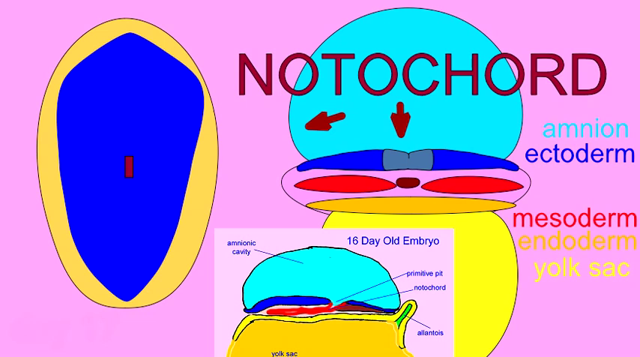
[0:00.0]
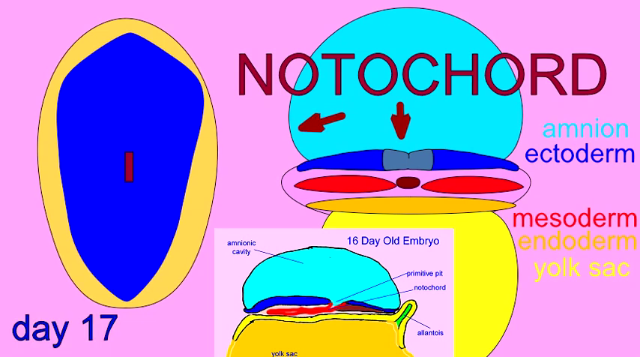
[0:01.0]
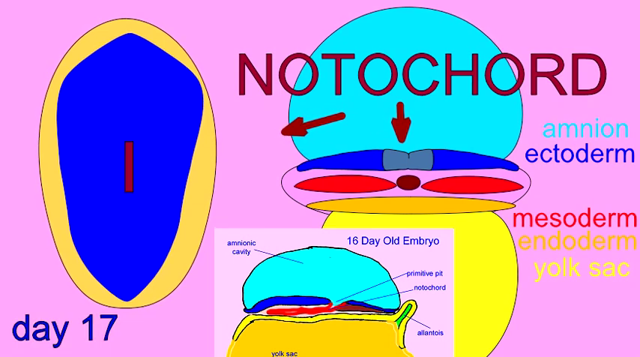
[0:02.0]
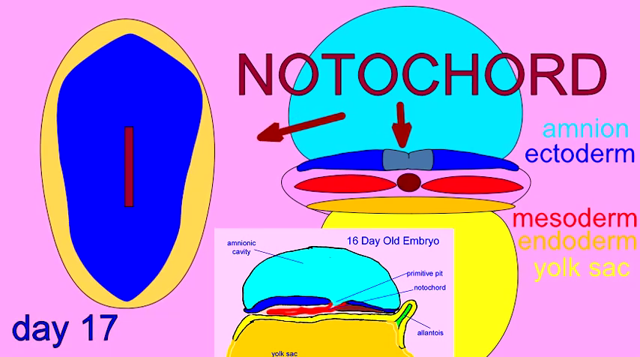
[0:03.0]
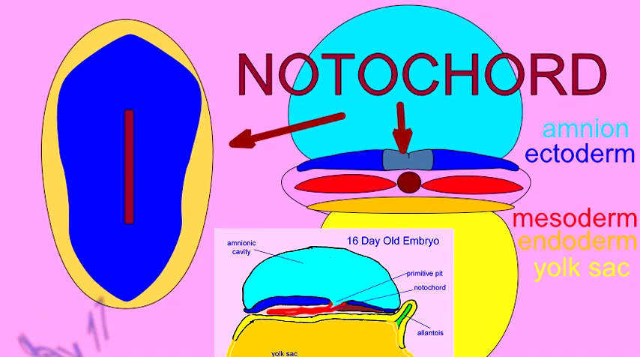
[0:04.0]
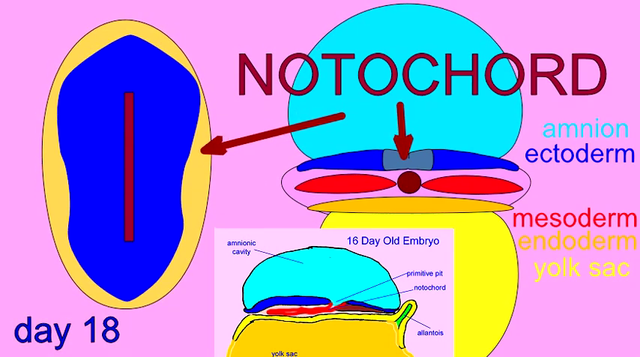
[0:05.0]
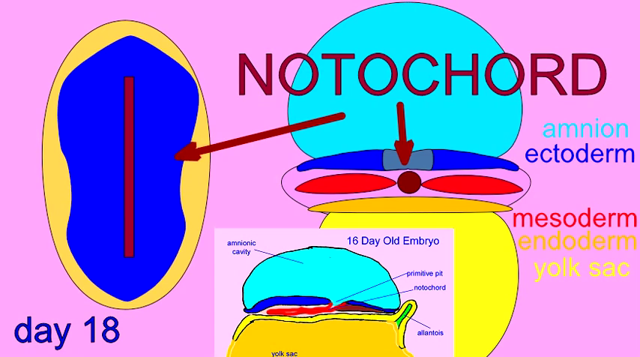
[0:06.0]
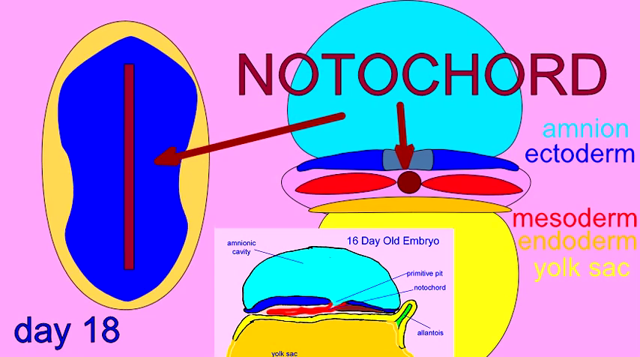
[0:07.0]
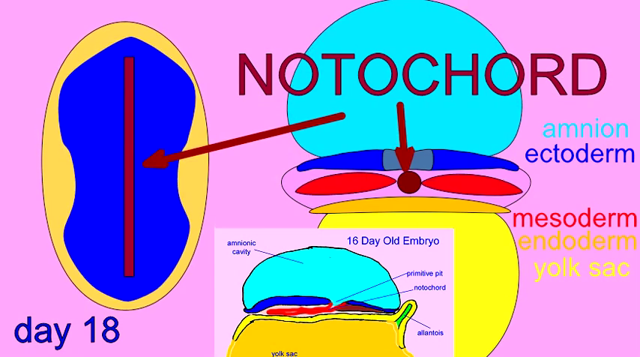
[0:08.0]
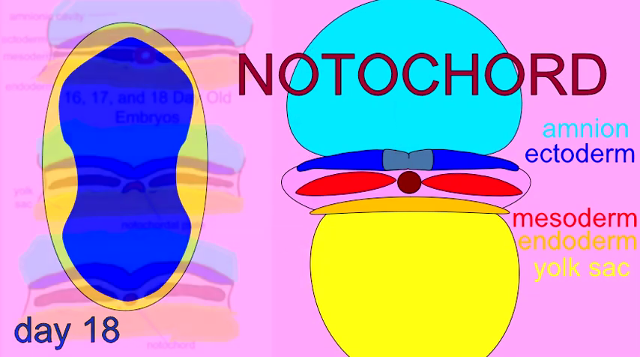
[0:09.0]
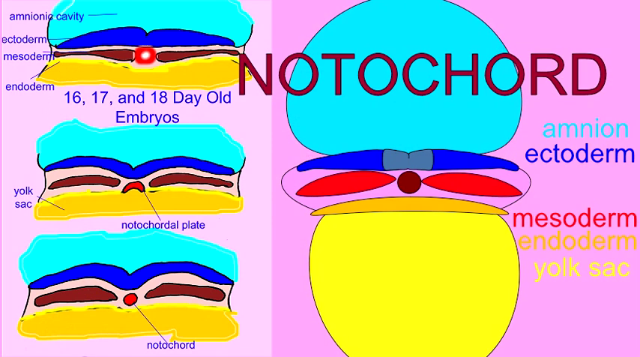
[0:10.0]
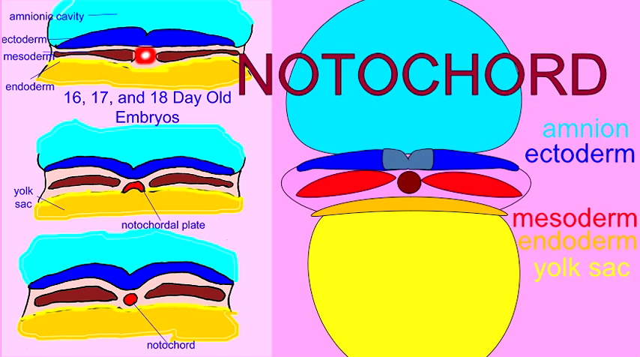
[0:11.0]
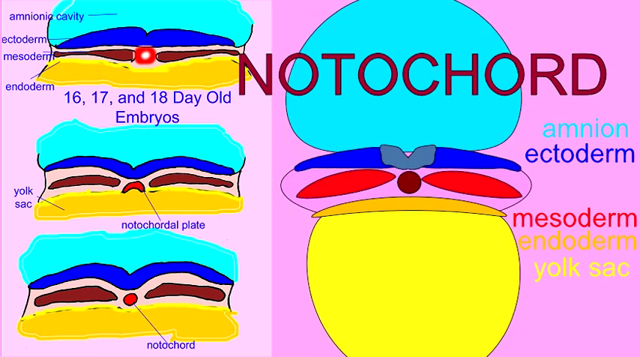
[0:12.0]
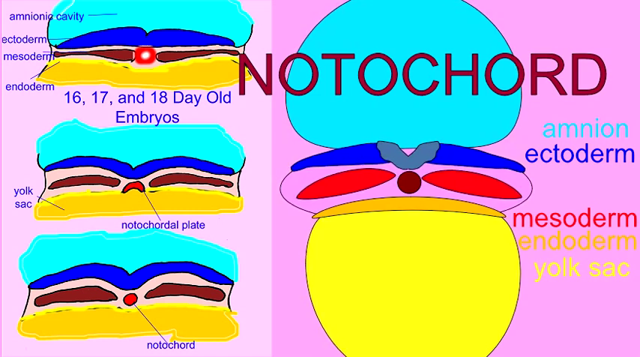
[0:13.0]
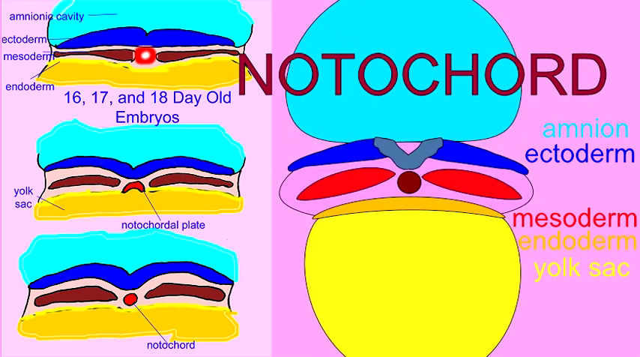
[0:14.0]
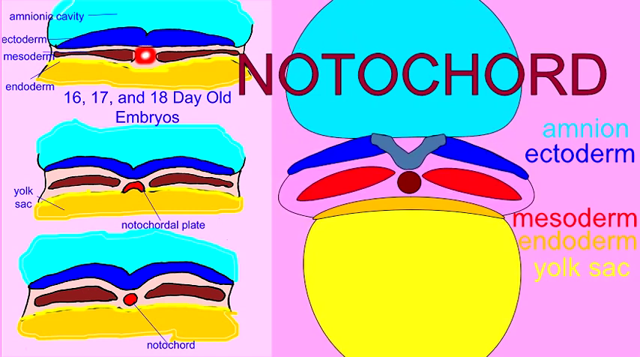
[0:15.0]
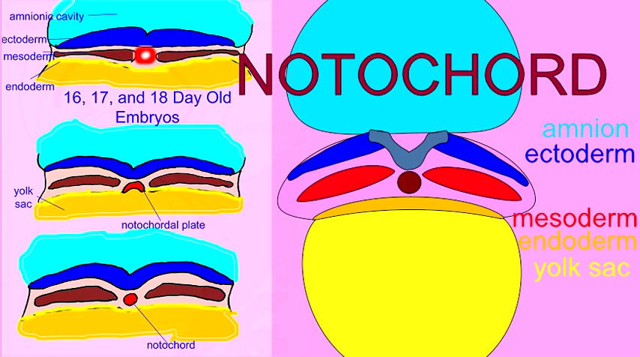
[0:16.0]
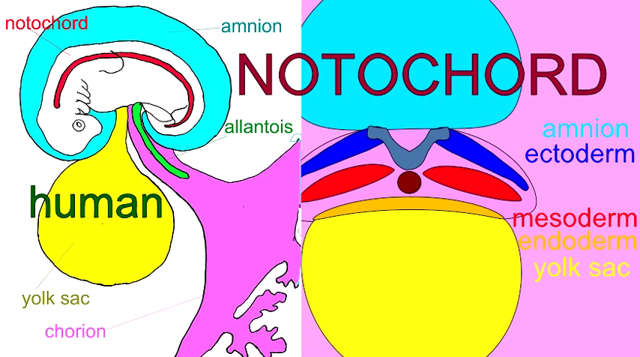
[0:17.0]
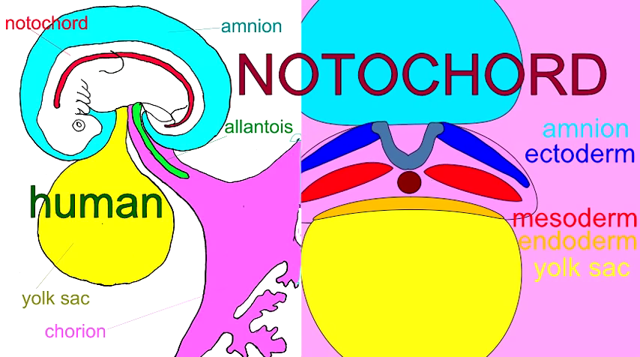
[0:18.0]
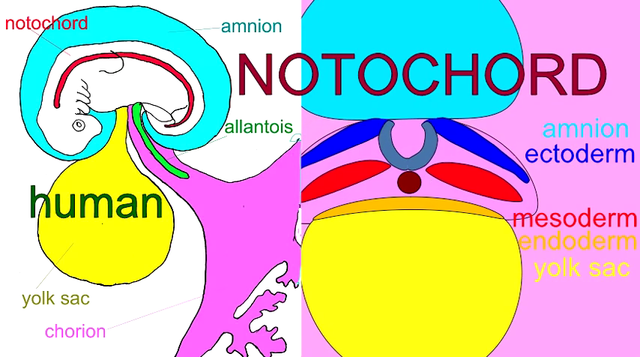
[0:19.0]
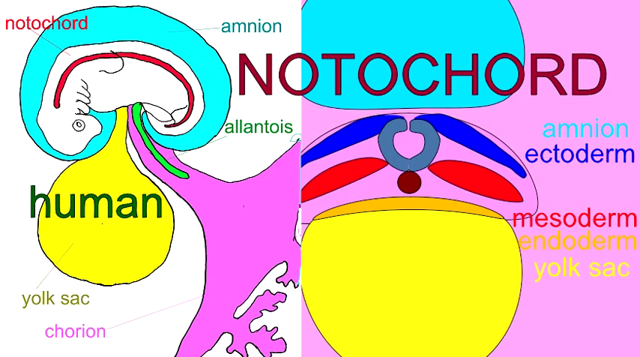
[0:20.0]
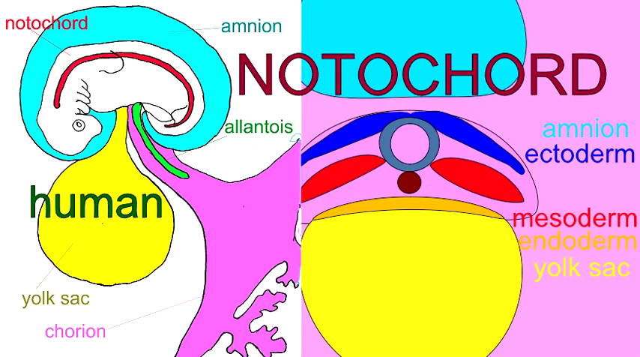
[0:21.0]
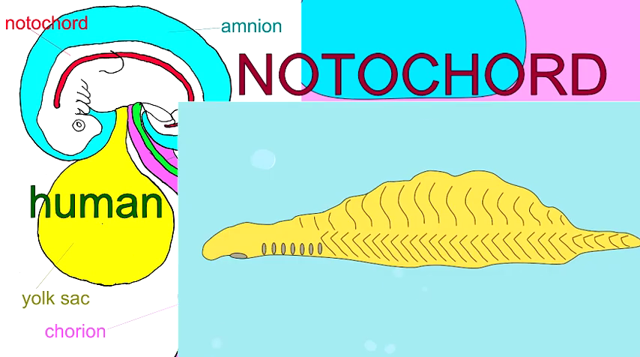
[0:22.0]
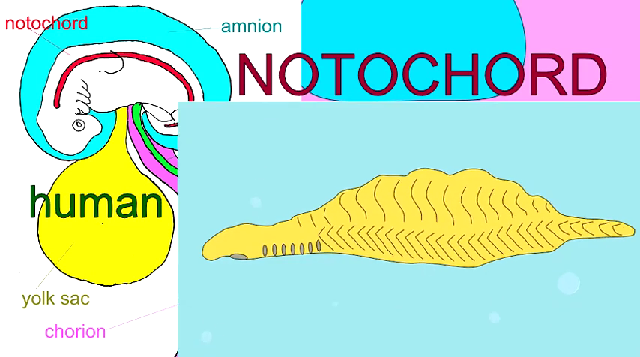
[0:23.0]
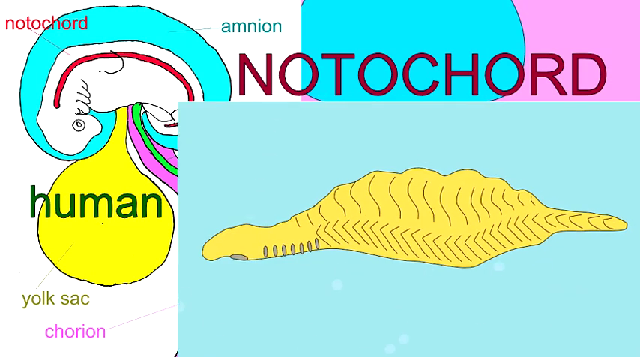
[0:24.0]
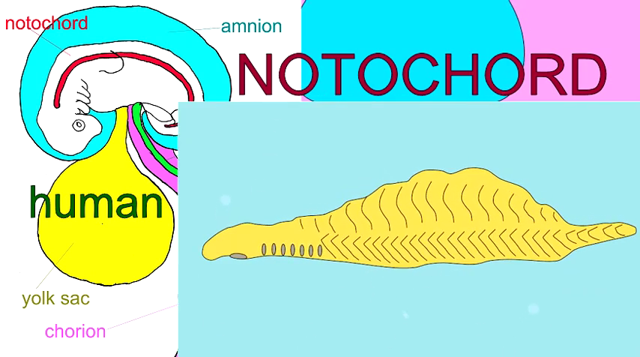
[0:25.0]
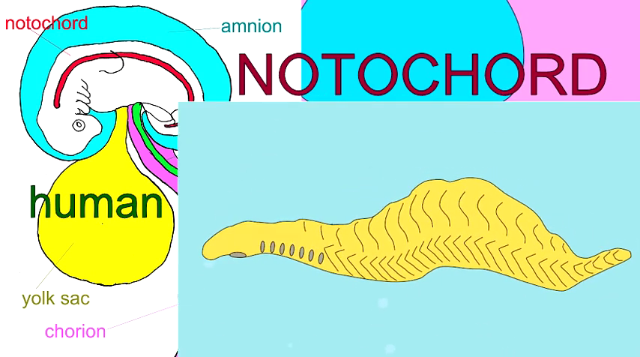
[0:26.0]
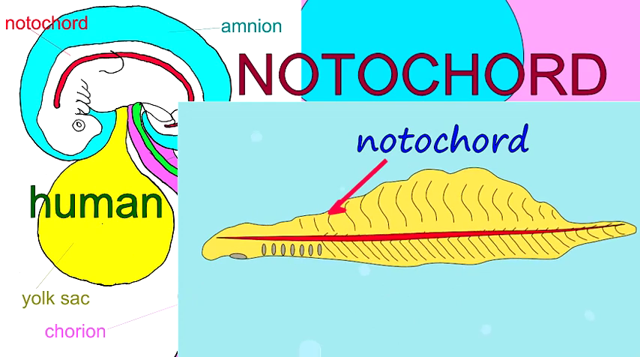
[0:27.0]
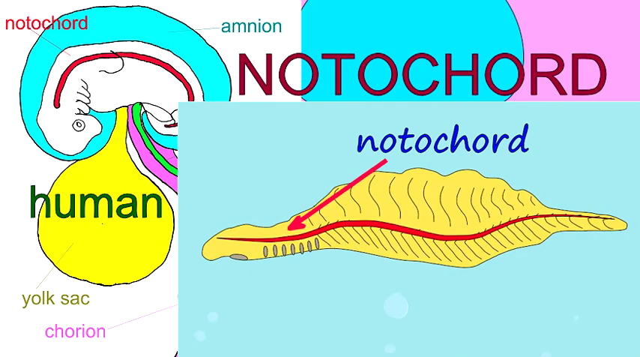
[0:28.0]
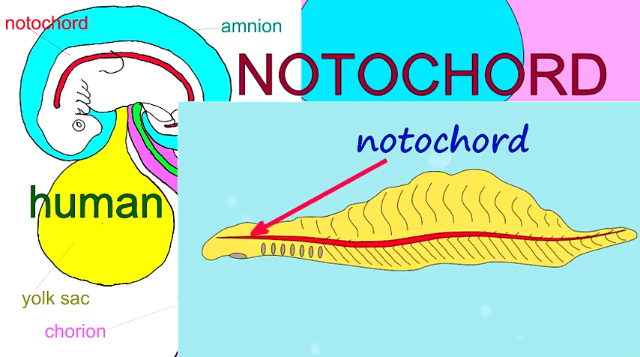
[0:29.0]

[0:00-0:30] The word "NOTOCHORD" appears at the top in red lettering. A diagram on the screen points to different things. On the right-hand side are the words "aminio", "ectoderm", "mesoderm", "endoderm" and "yolk sac". Below, a square containing an amino cavity shows a 16-day-old embryo, with its different parts labeled and arrows pointing to the specific parts of the diagram. The diagram shows where the notochord is located: two red arrows slowly grow to the point where the notochord is, which is a straight red line. On the left of the screen is a yellow circle with a blue circle and a red line inside it. The yolk sac is shown at day 18. The next screen shows the 16, 17 and 18-day-old embryos on the left-hand side.